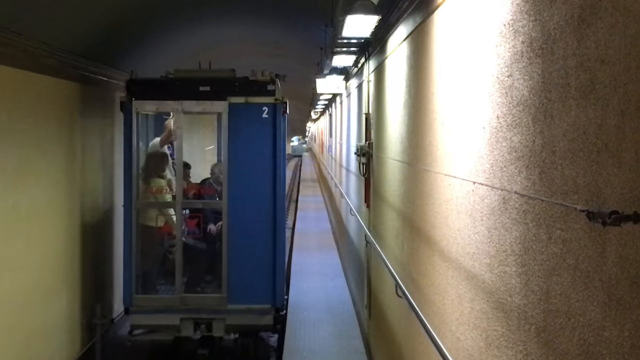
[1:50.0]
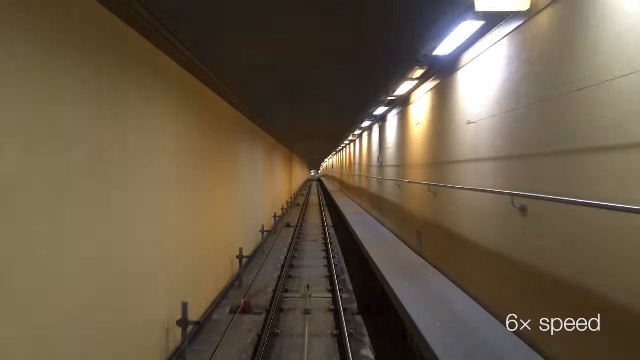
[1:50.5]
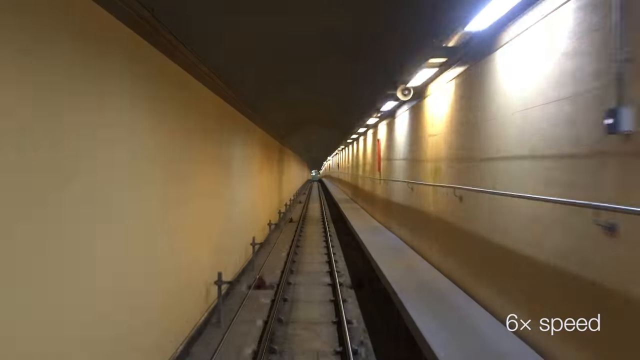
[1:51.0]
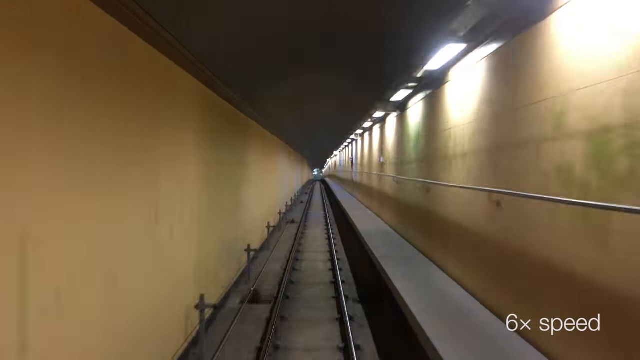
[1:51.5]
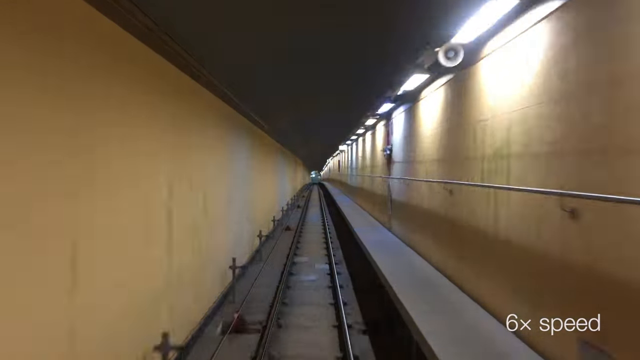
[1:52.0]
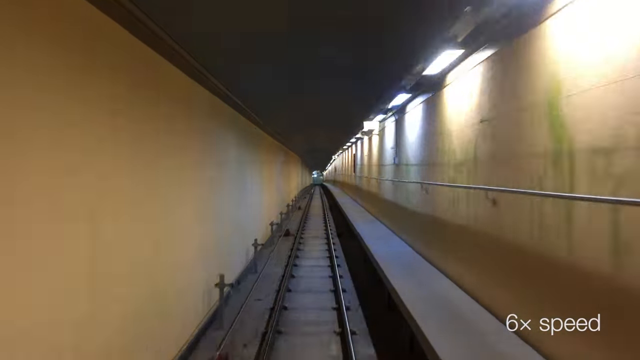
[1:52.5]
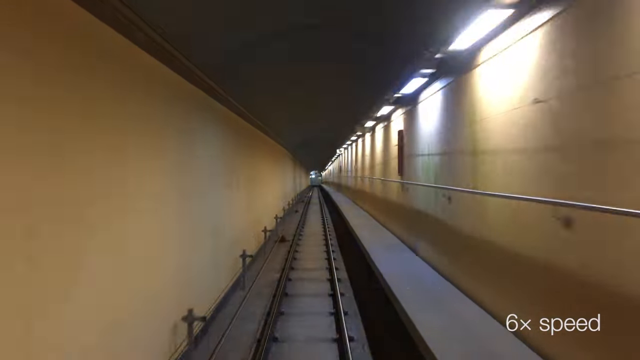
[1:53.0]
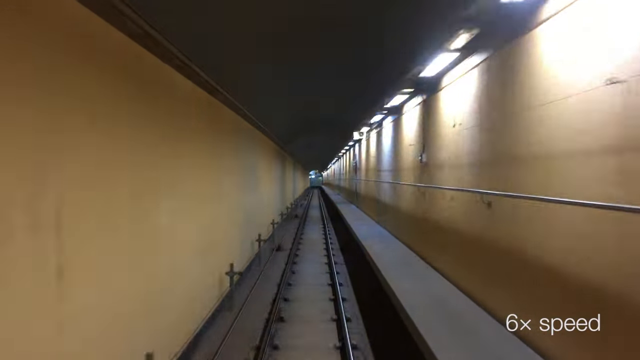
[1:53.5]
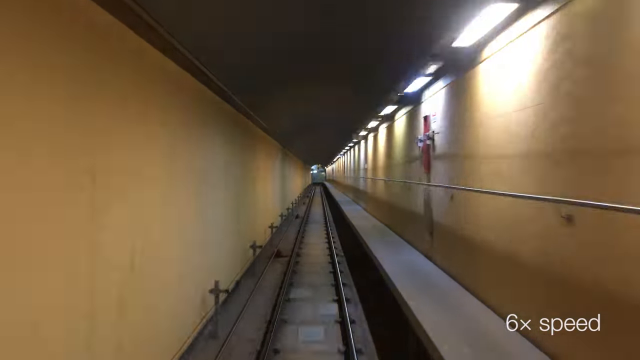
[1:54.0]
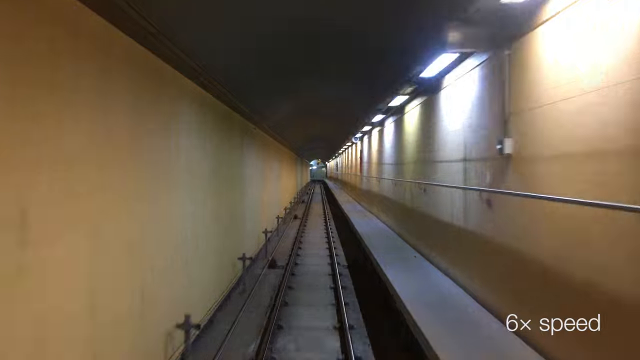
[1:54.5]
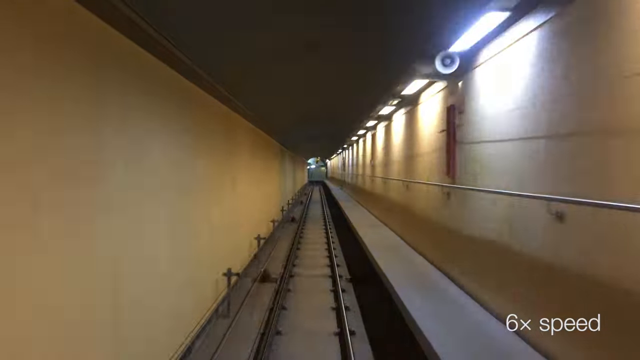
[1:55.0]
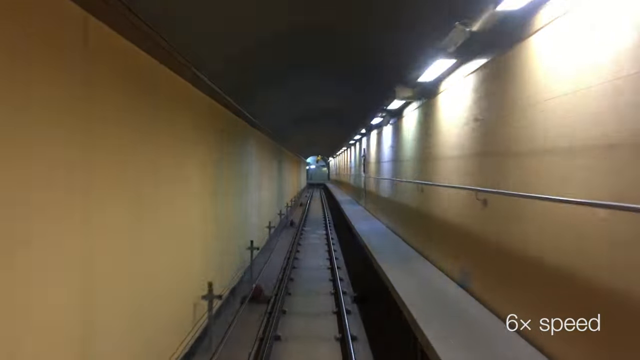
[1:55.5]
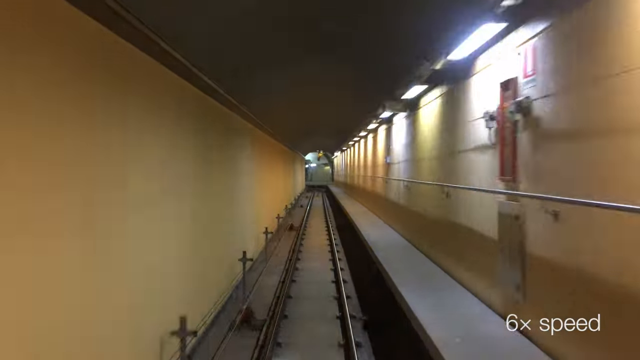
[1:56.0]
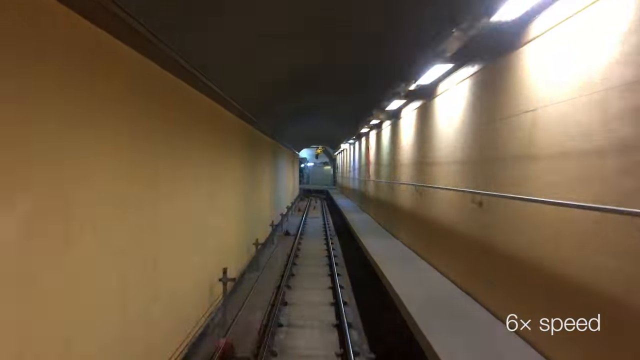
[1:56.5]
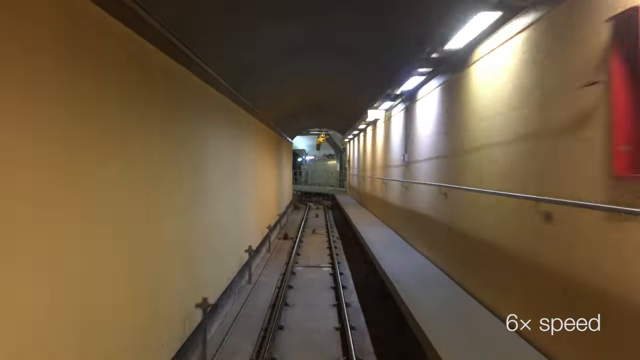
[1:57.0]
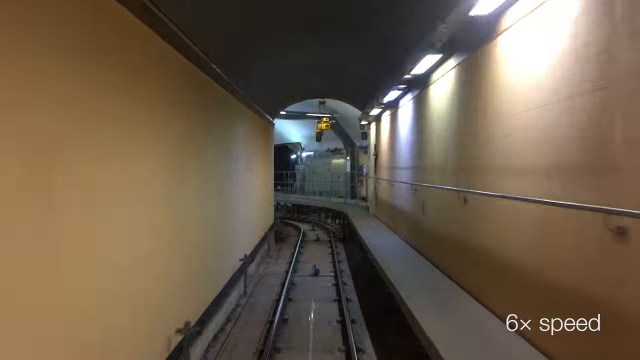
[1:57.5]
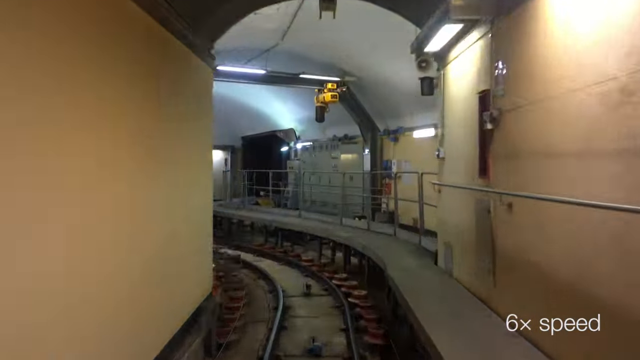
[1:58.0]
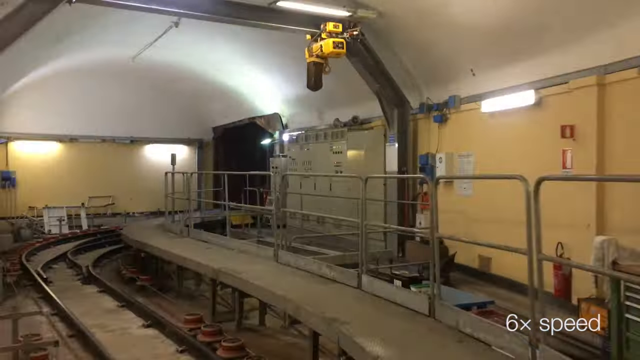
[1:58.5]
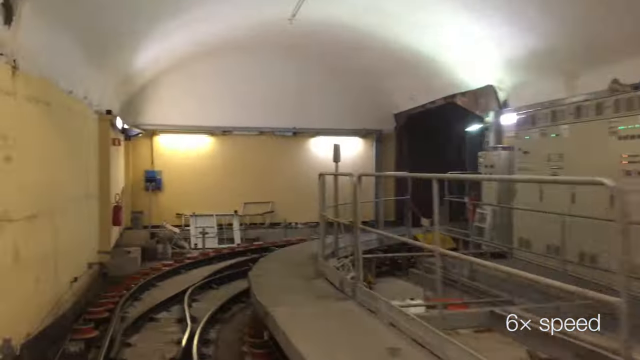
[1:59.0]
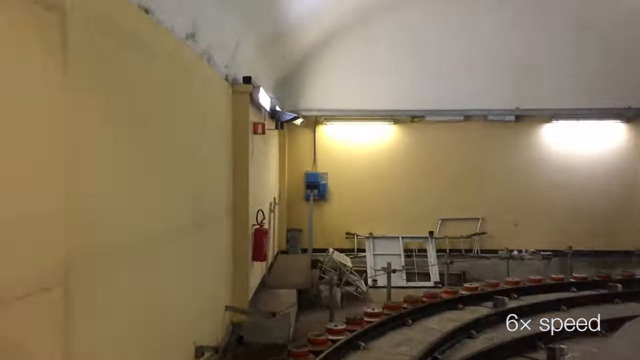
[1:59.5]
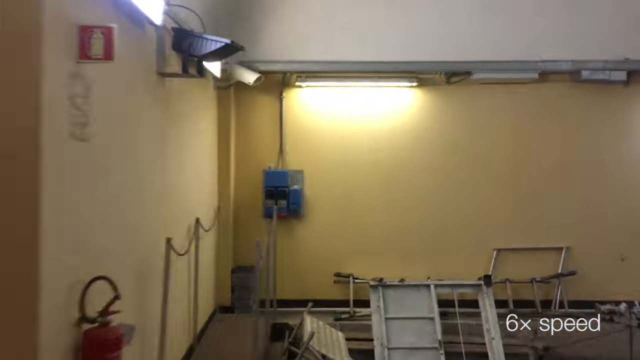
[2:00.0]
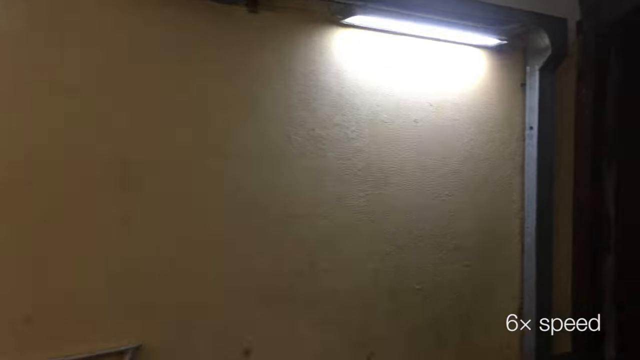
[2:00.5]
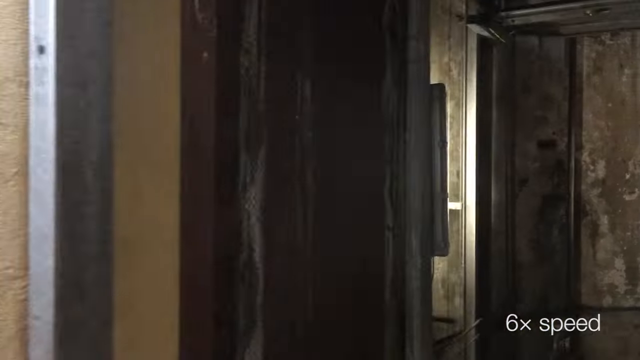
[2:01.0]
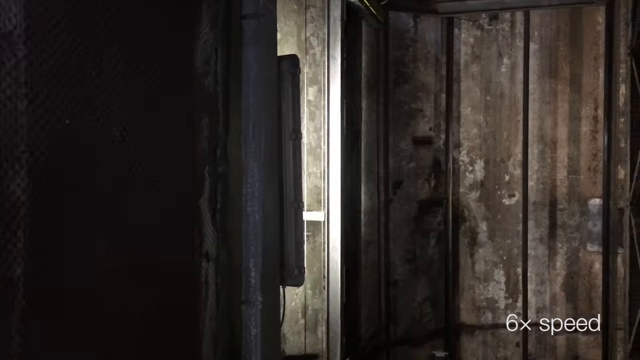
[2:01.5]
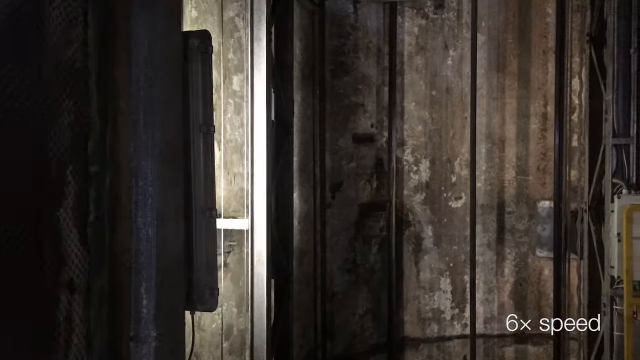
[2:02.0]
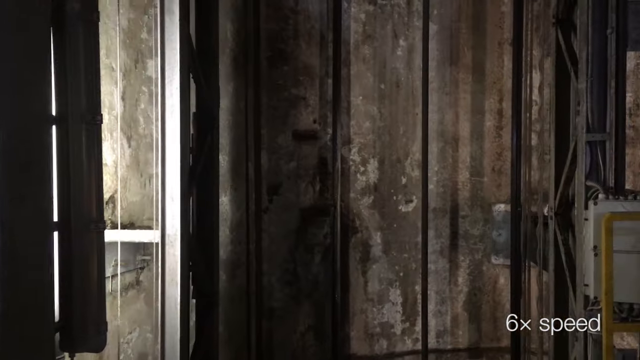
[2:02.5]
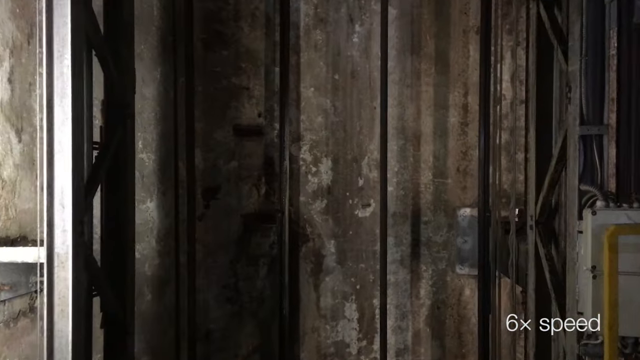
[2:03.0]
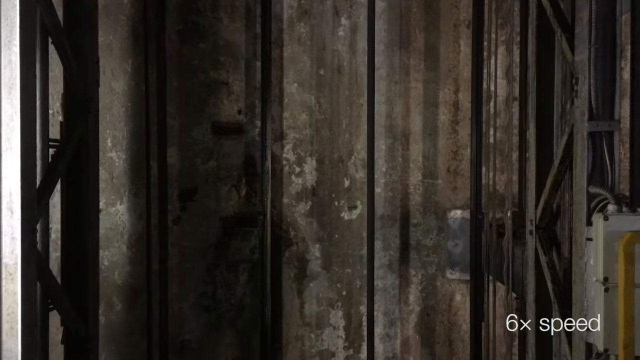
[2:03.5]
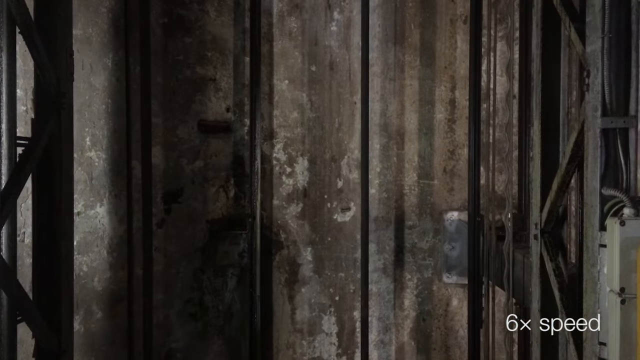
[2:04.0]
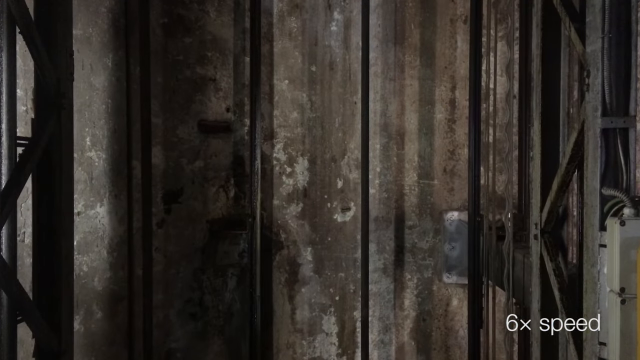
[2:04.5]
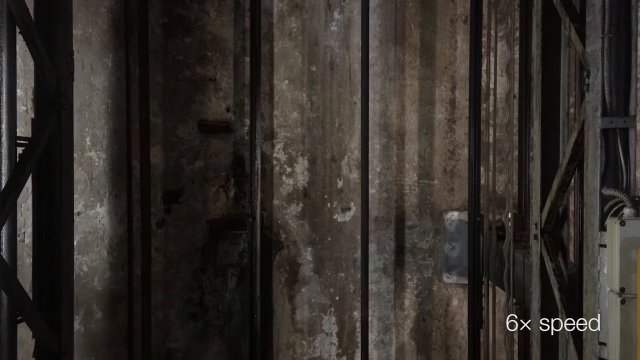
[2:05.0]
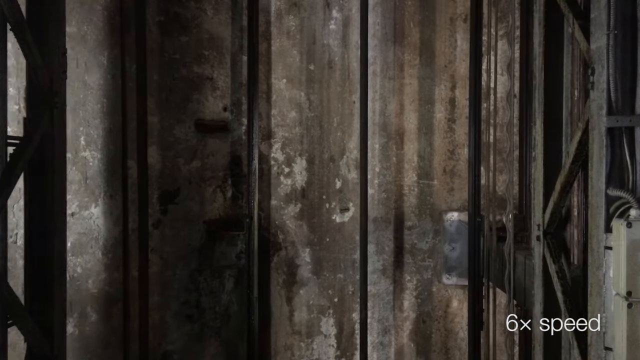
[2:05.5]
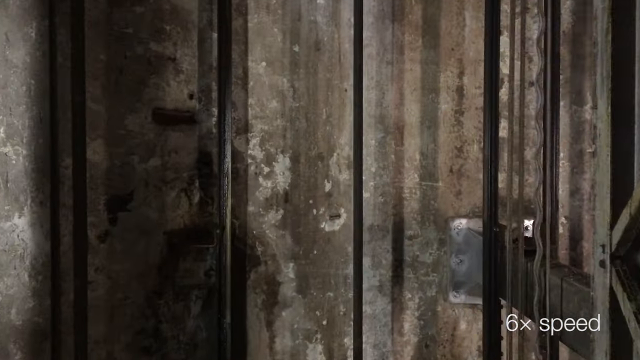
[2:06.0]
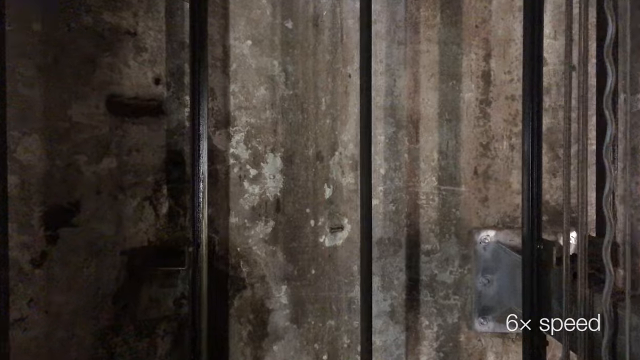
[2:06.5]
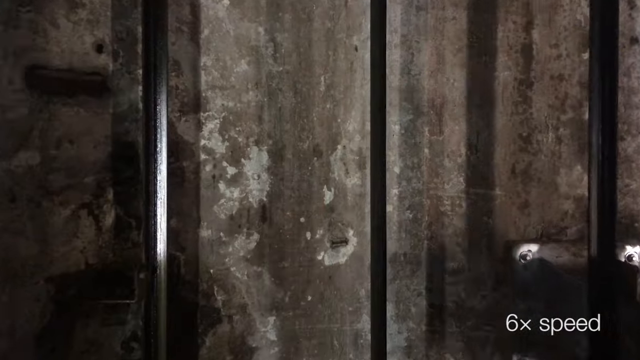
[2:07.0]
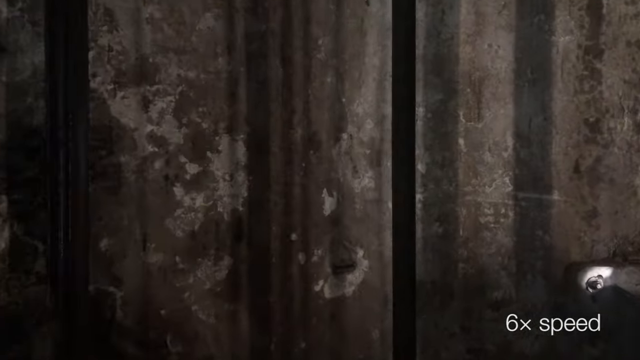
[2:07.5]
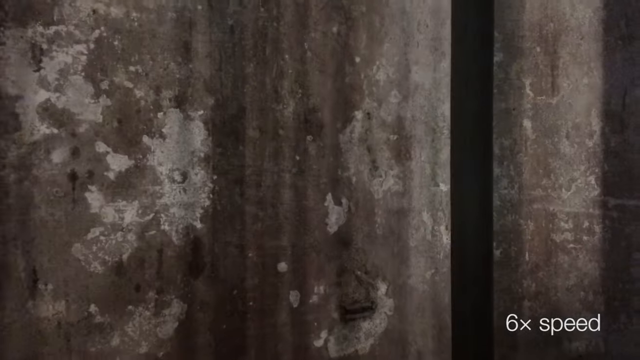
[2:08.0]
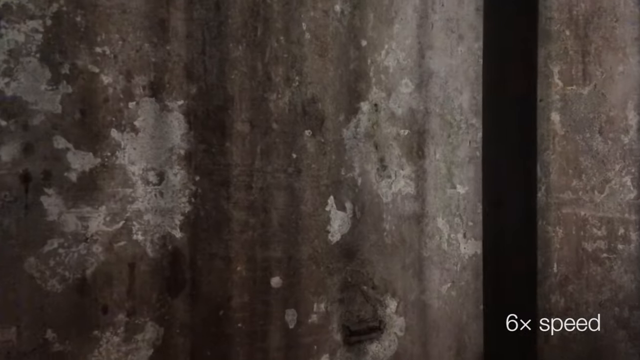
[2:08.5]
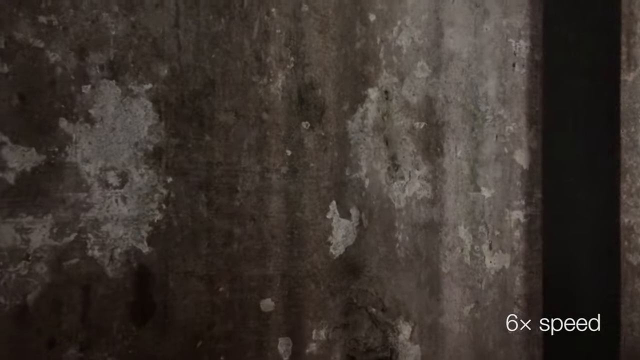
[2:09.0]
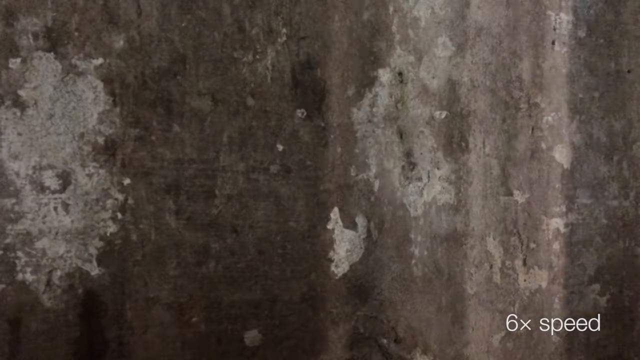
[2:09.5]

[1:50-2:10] The blue box travels straight through the tunnel. The footage is sped up, with "6X" shown in the bottom right corner, and the tunnel still takes about five to 10 seconds to pass. Out of the tunnel, the box turns the corner where the small circular pieces are and enters the rectangular elevator shaft with pulleys and levers that apparently lift the box upwards. They are kind of reflected along the stone walls of the very narrow, tight, square-shaped shaft.